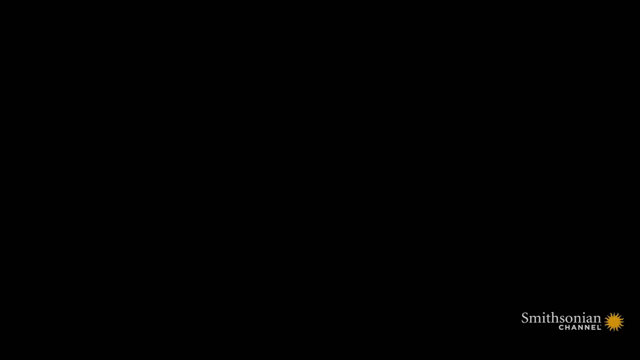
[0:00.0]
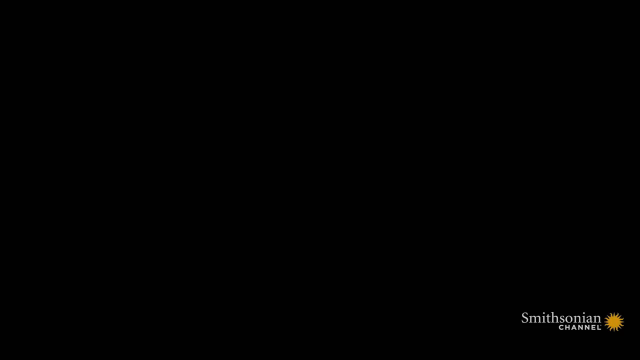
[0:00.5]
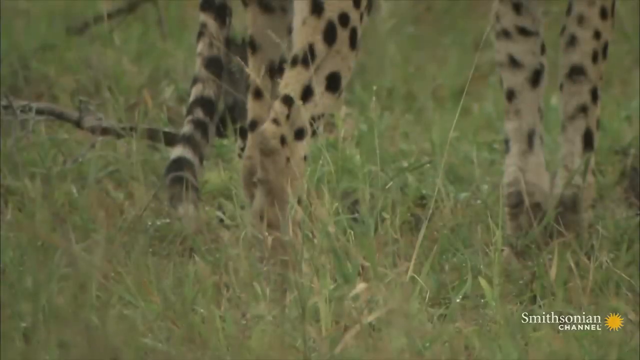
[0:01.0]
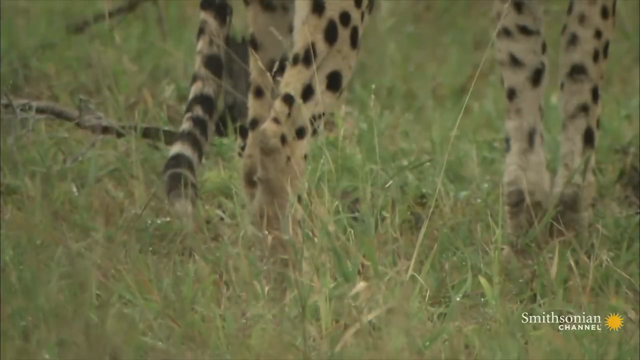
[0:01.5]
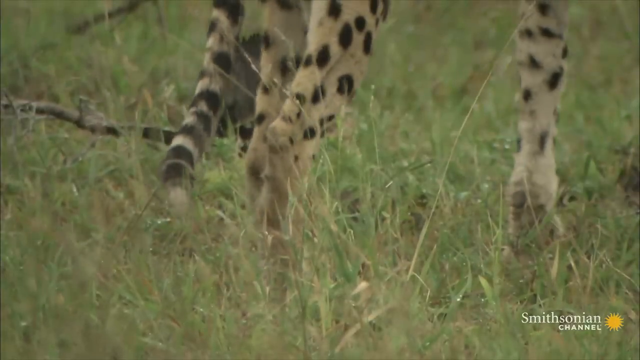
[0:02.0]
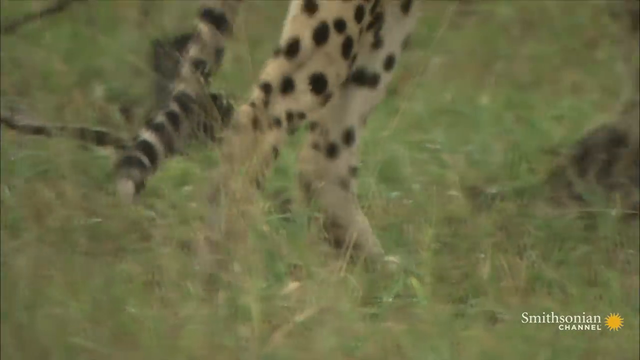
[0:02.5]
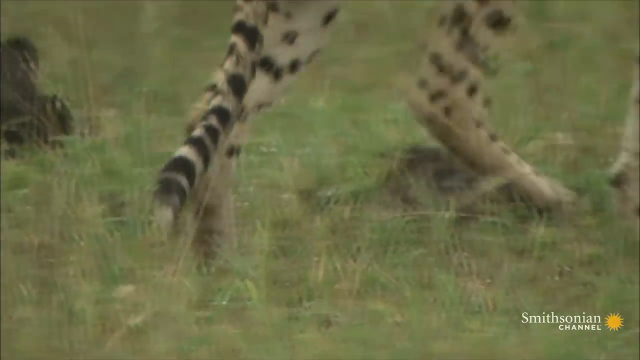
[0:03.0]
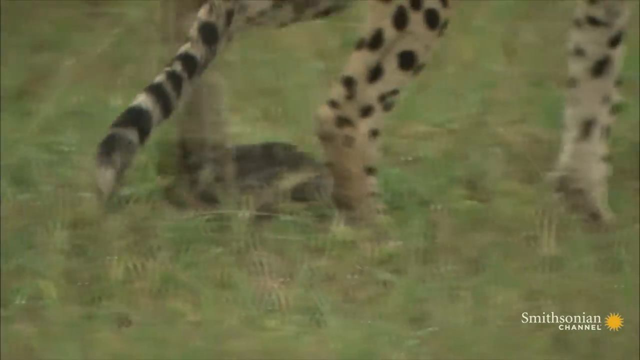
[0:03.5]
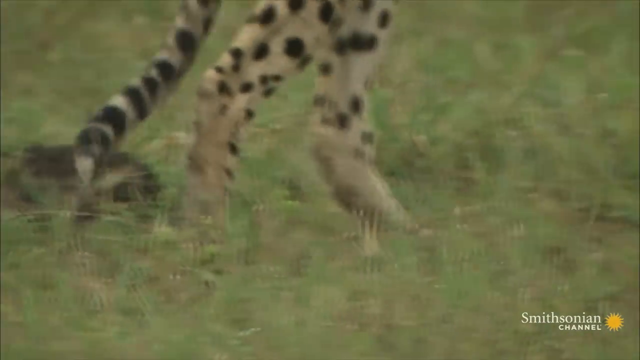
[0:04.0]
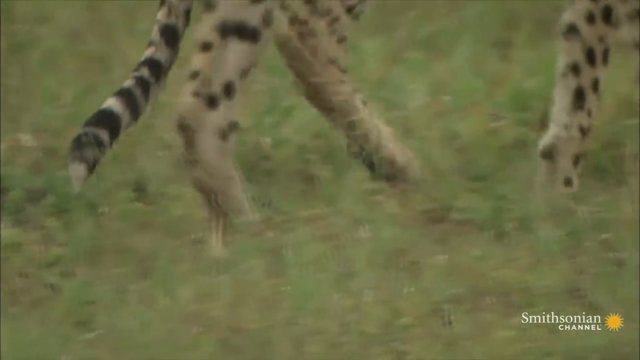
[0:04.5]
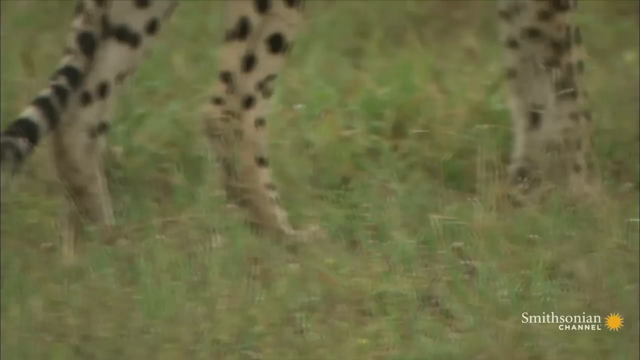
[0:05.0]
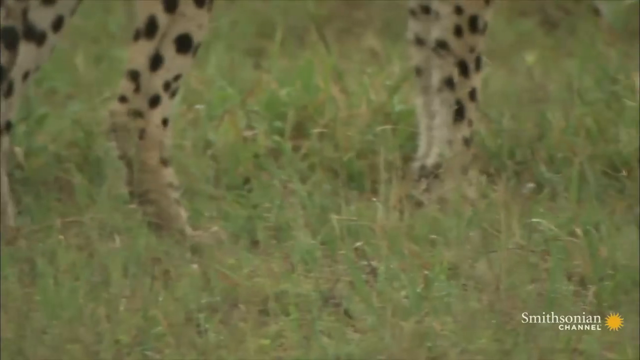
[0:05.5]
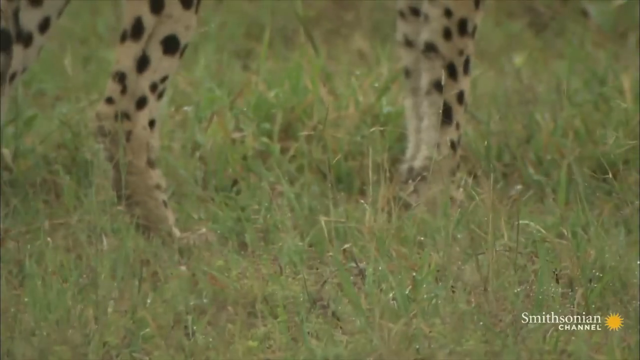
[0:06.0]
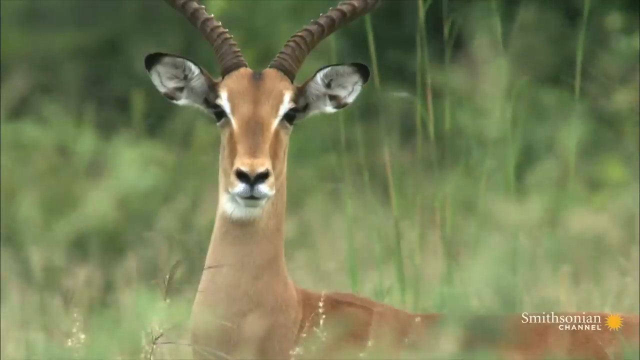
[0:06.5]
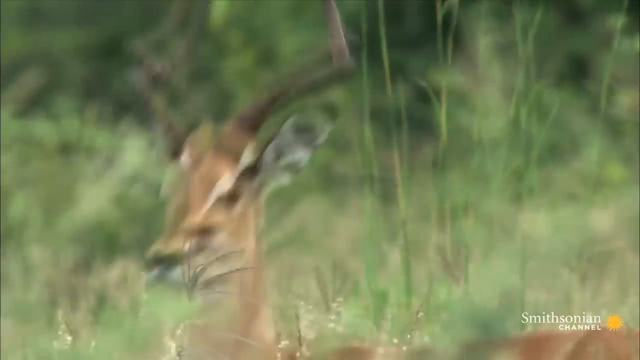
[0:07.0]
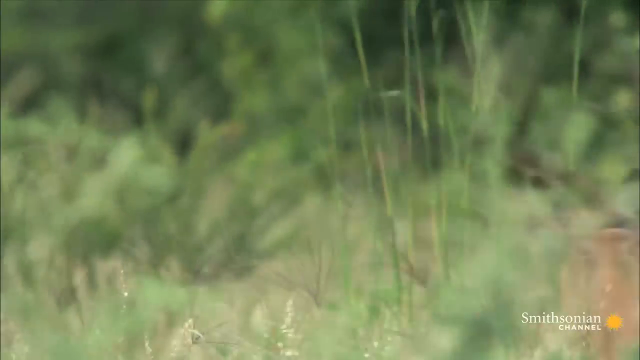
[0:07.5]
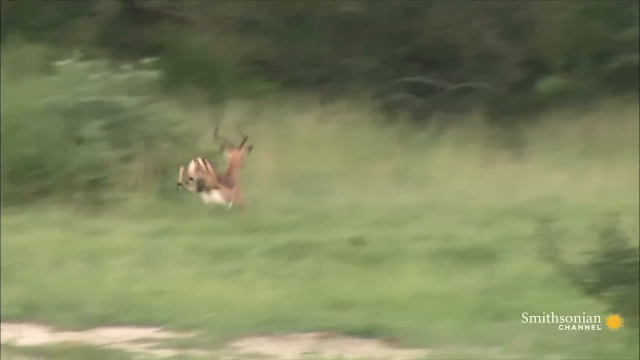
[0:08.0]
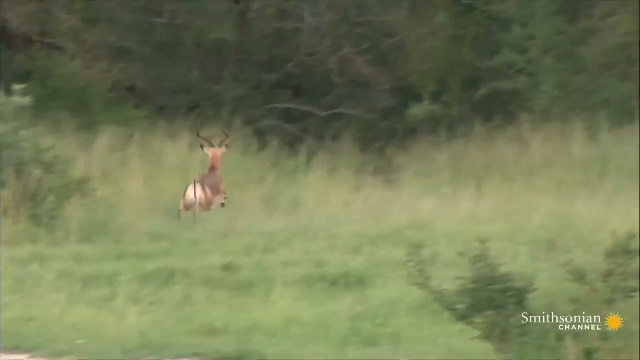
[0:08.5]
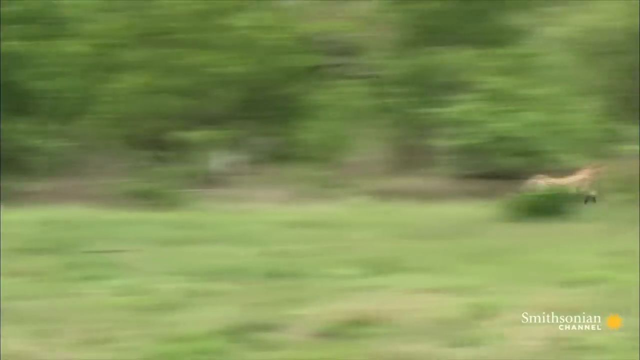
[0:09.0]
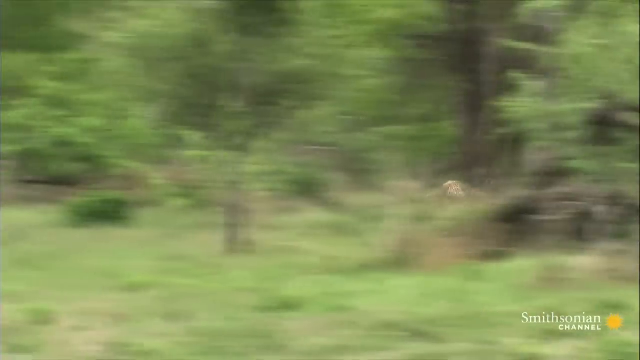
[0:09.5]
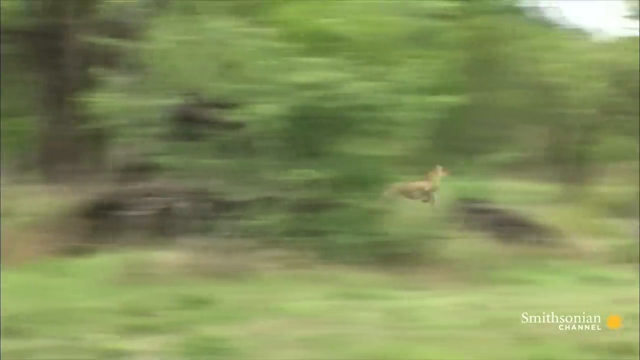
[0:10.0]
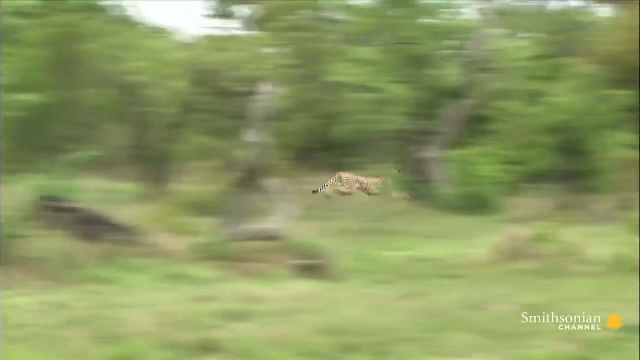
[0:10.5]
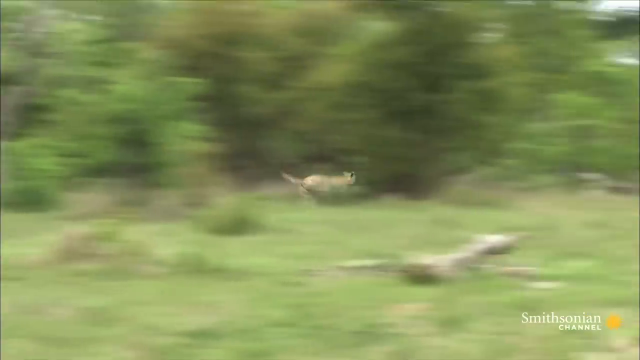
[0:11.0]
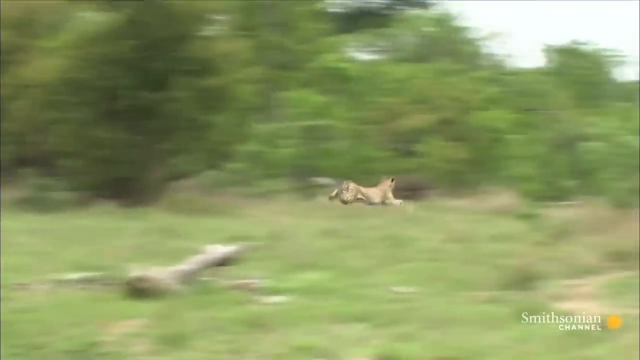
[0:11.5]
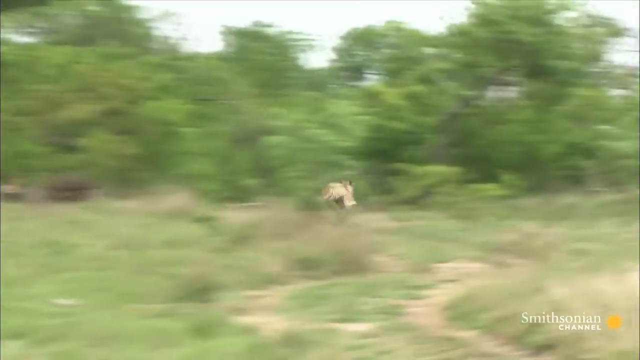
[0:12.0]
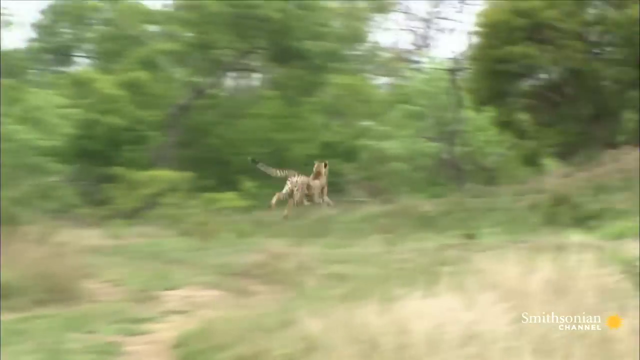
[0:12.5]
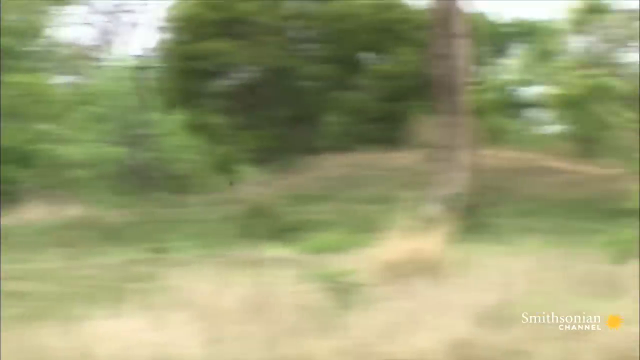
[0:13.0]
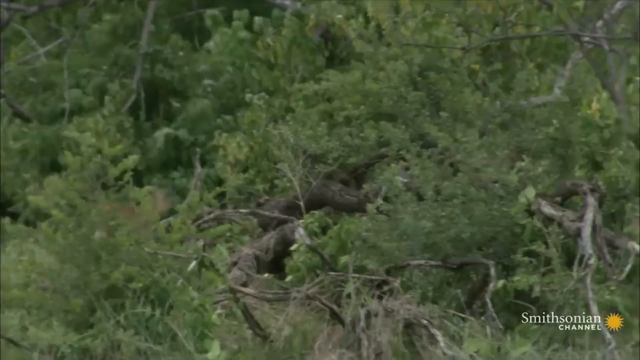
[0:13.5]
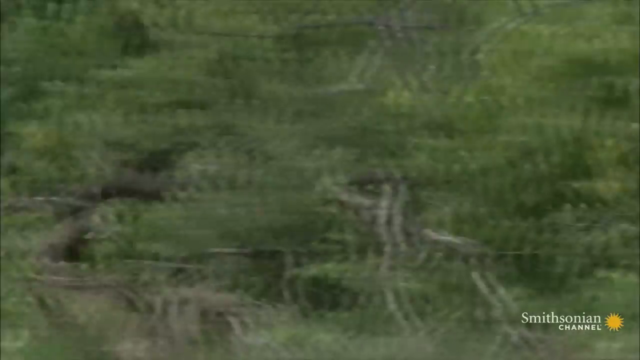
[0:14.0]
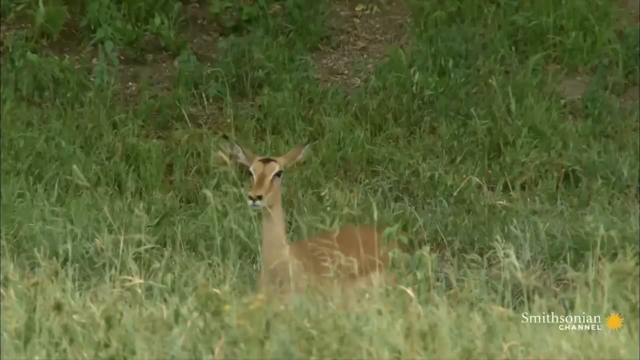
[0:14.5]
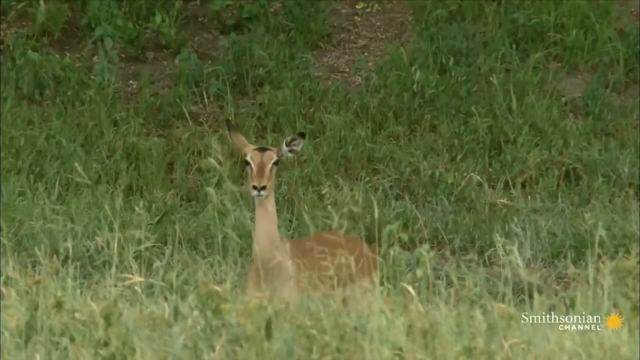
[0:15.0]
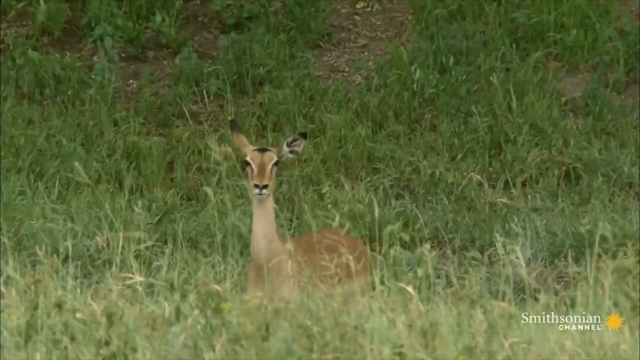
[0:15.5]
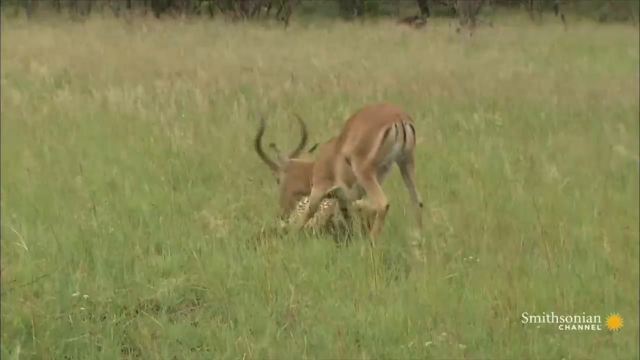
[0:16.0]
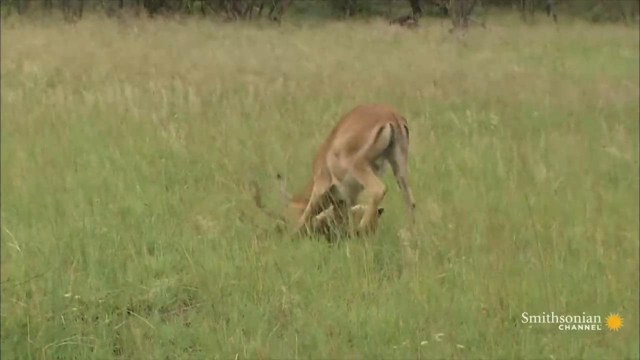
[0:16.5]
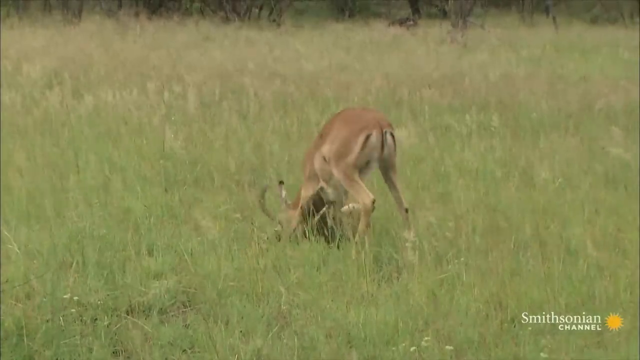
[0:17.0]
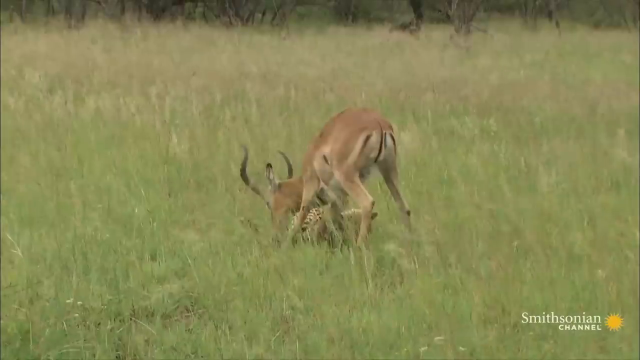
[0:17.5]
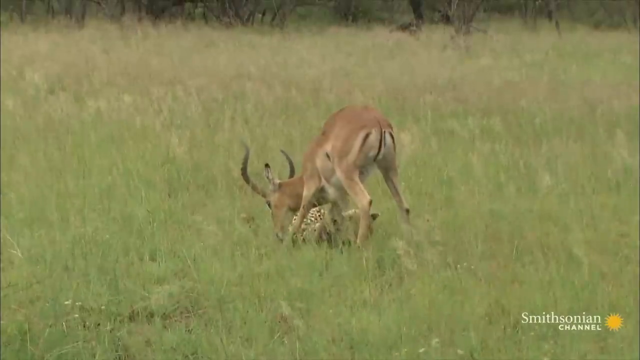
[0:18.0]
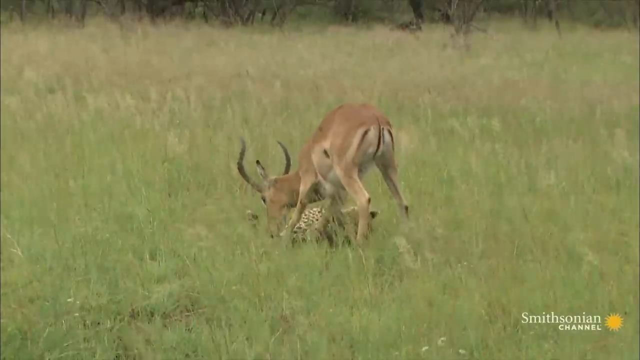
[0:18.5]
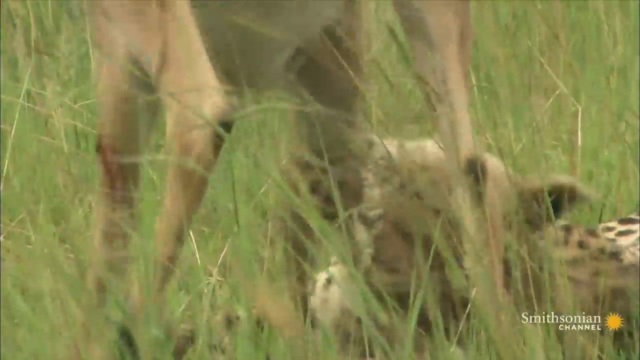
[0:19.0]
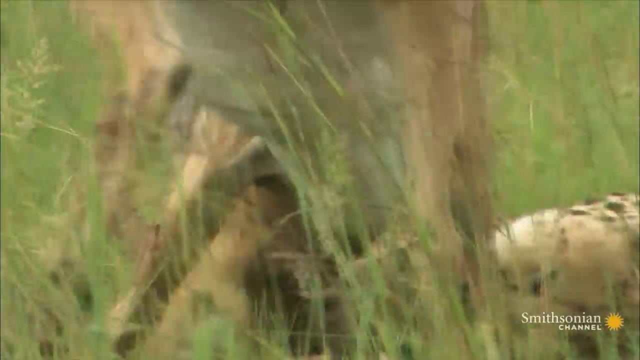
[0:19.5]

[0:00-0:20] The video opens in what looks like an outdoor jungle setting, where two animals appear: a cheetah and possibly an antelope. At first the cheetah seems to be chasing through the forest while the antelope runs, but at the very end it looks like the antelope has overpowered the cheetah and is apparently in the process of killing it. It is a windy day in a forest with trees, bushes and logs, and at some points there seem to be paths where the dirt is visible. The video is from the Smithsonian Channel.